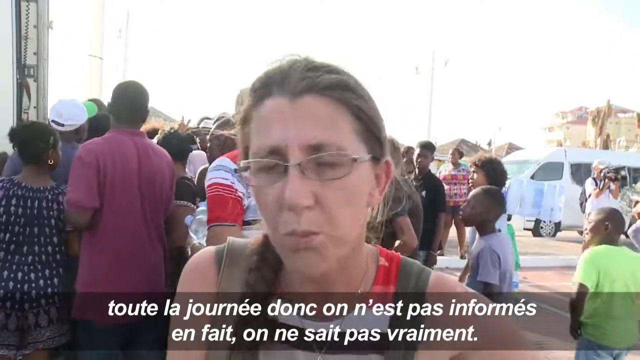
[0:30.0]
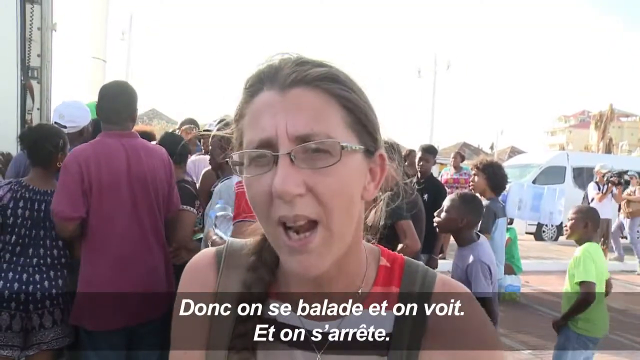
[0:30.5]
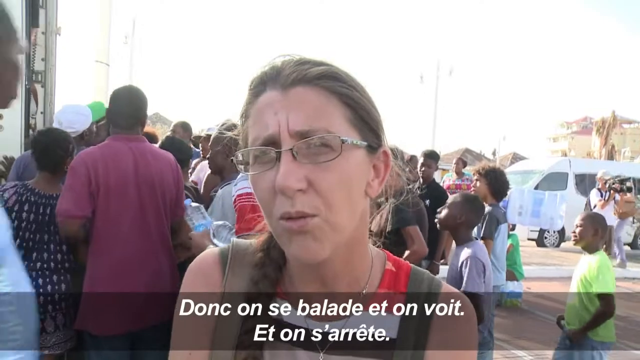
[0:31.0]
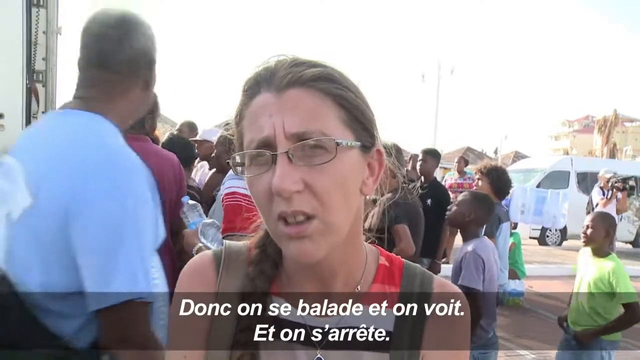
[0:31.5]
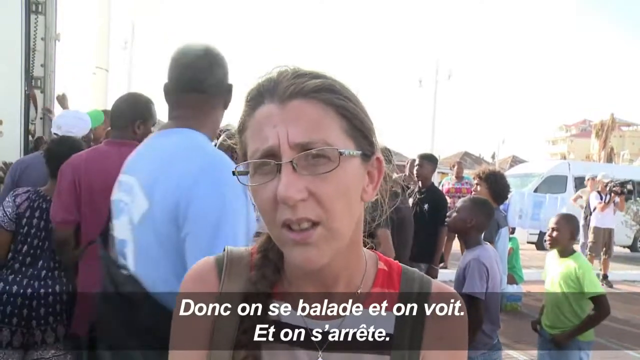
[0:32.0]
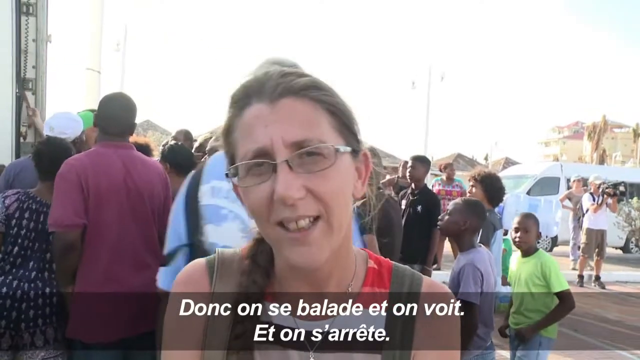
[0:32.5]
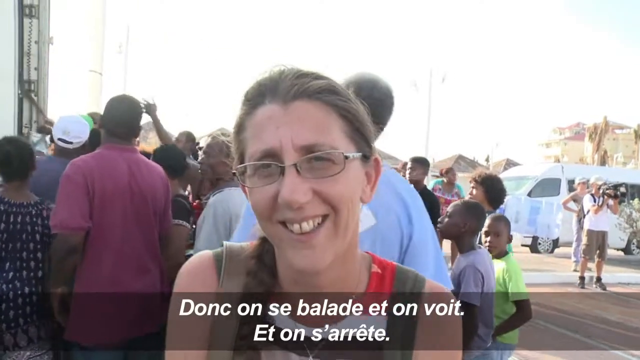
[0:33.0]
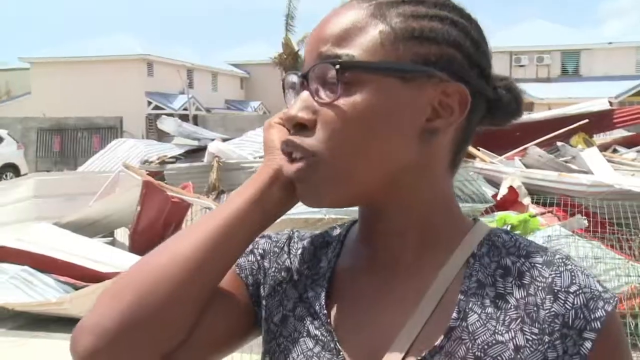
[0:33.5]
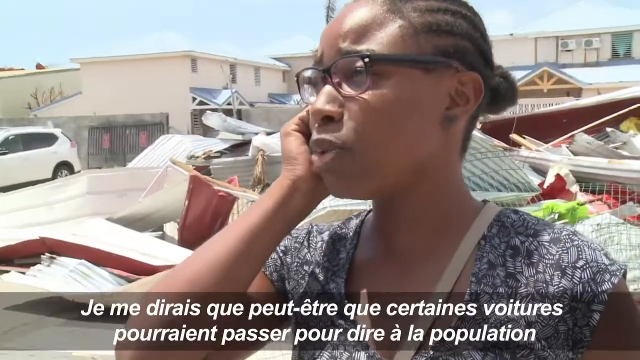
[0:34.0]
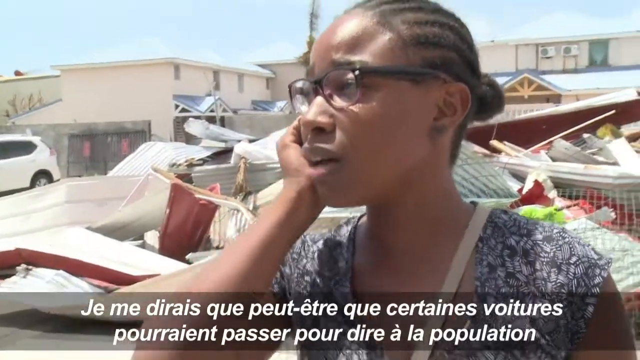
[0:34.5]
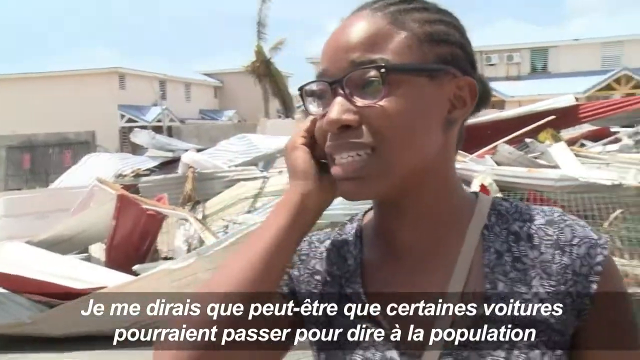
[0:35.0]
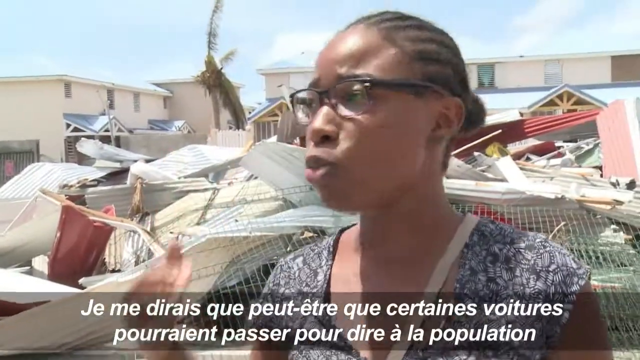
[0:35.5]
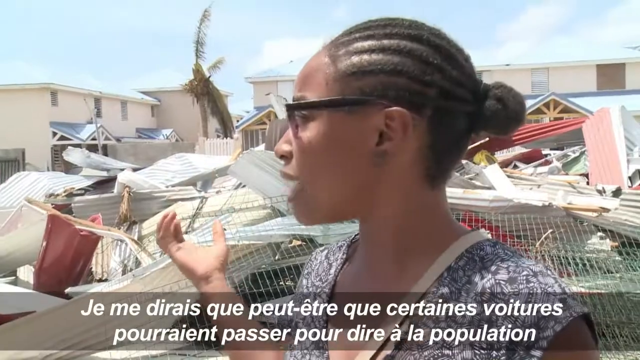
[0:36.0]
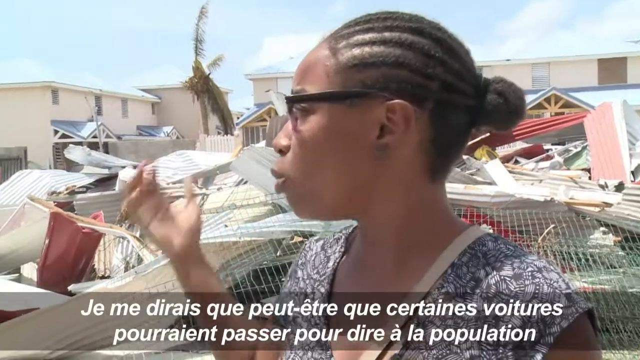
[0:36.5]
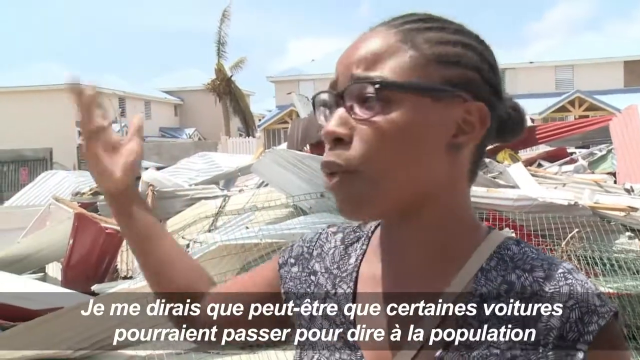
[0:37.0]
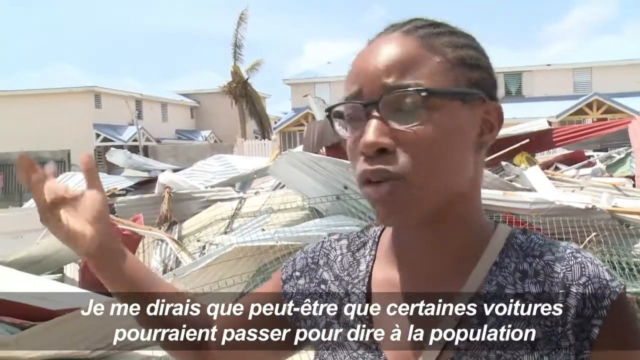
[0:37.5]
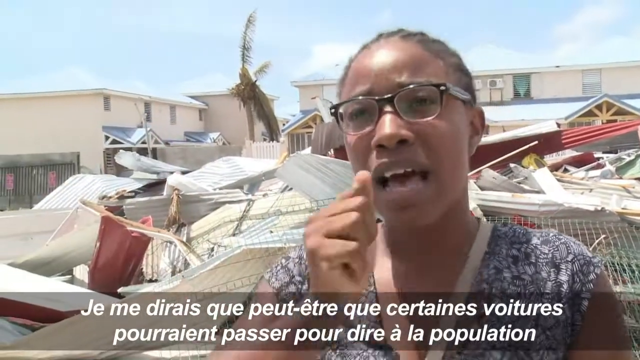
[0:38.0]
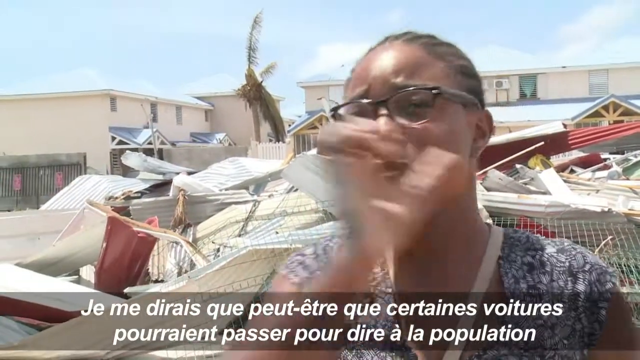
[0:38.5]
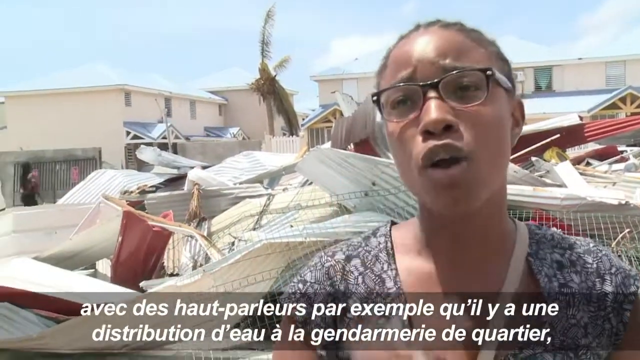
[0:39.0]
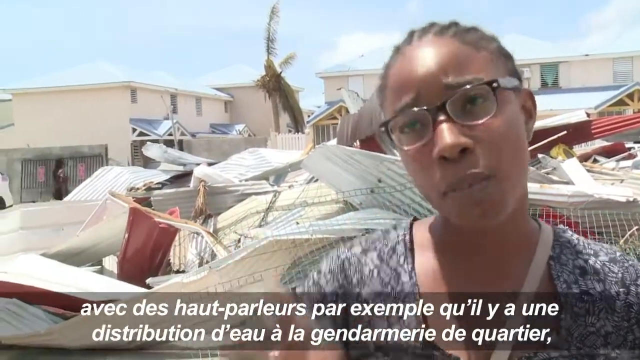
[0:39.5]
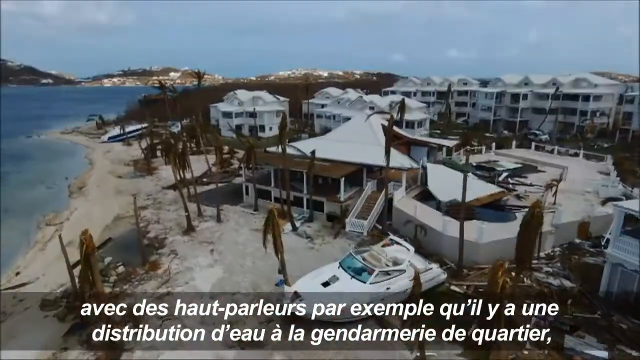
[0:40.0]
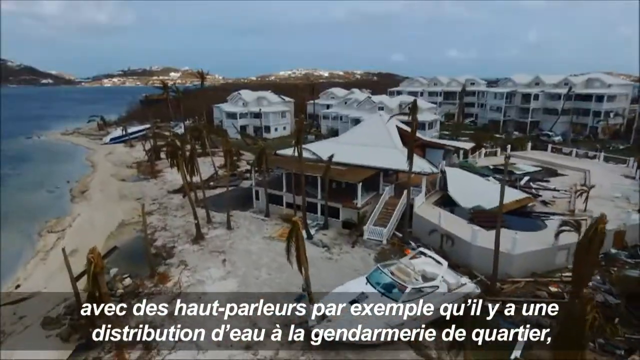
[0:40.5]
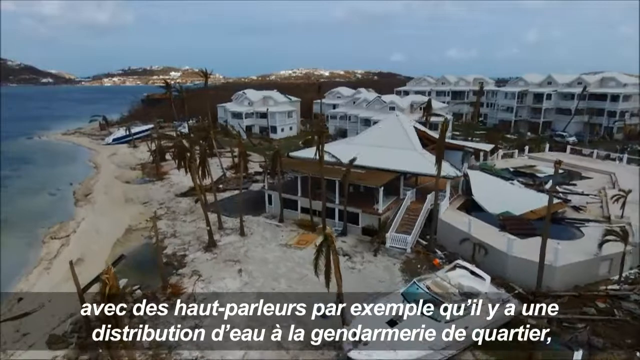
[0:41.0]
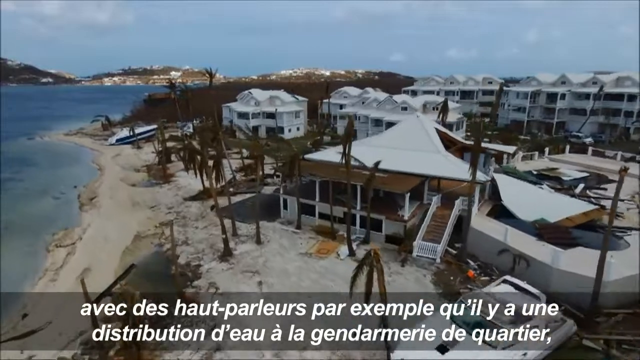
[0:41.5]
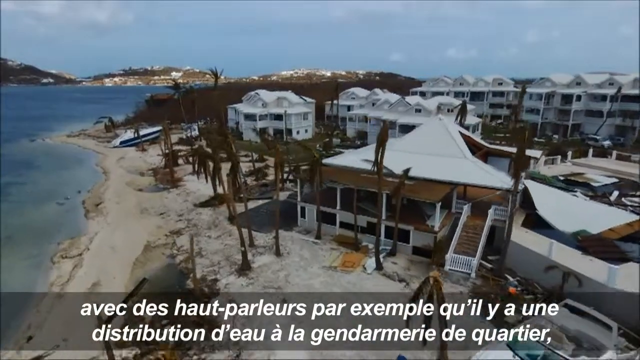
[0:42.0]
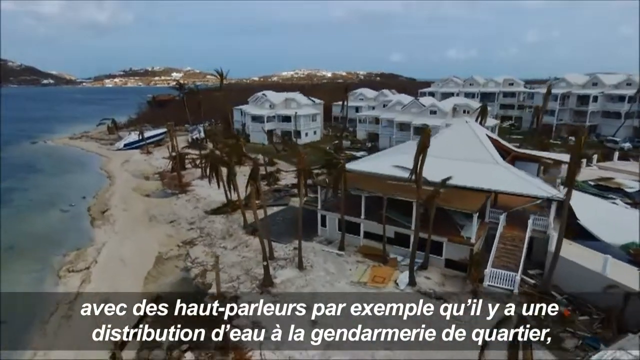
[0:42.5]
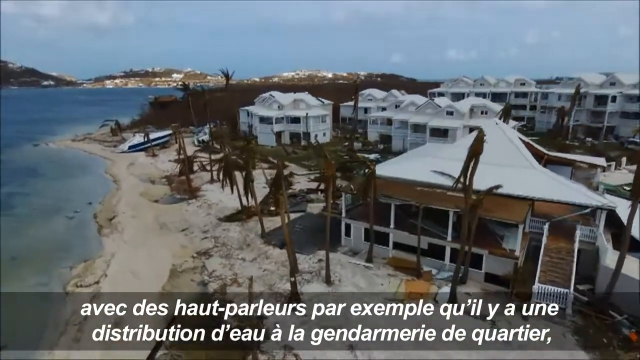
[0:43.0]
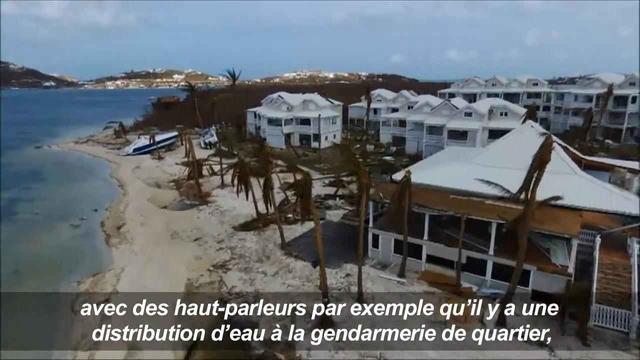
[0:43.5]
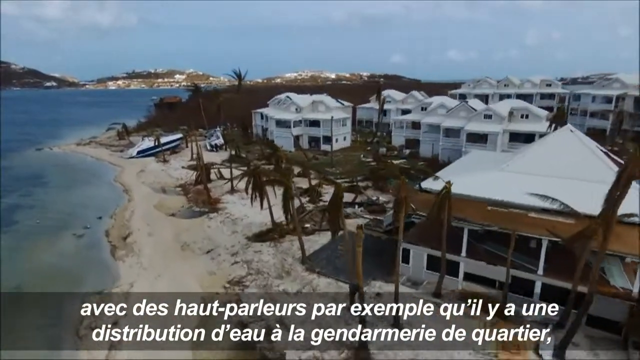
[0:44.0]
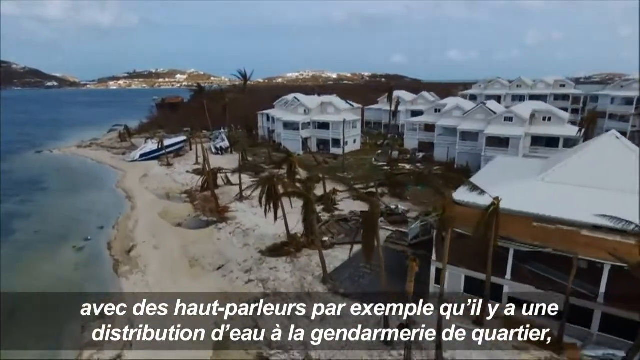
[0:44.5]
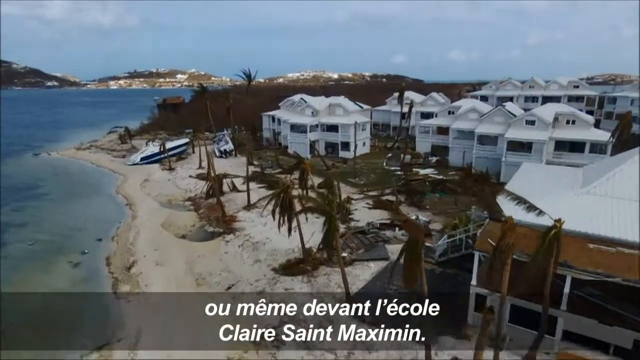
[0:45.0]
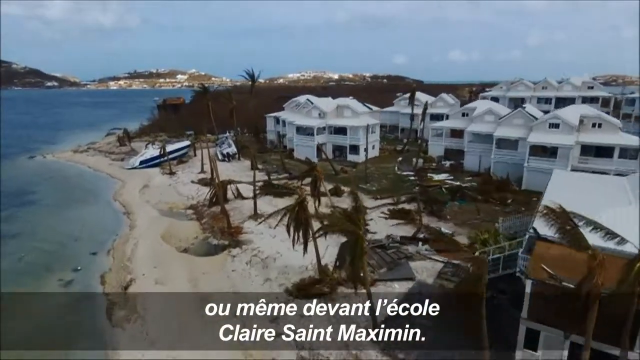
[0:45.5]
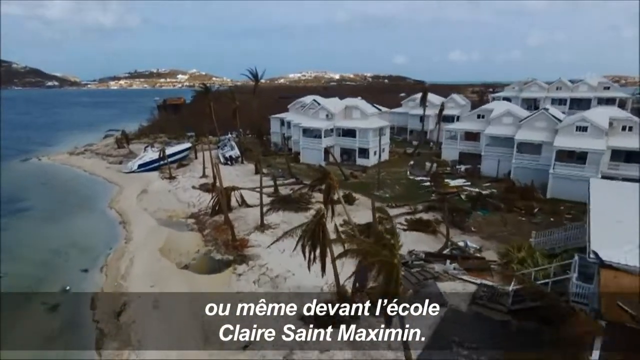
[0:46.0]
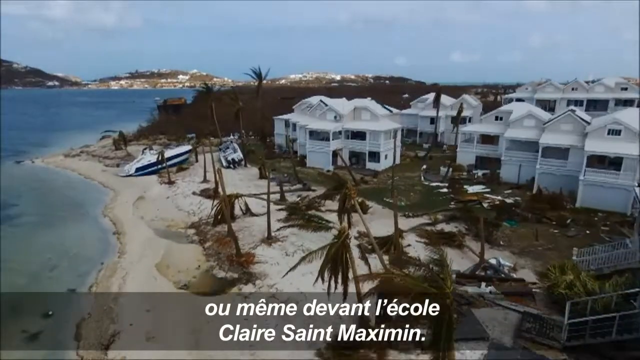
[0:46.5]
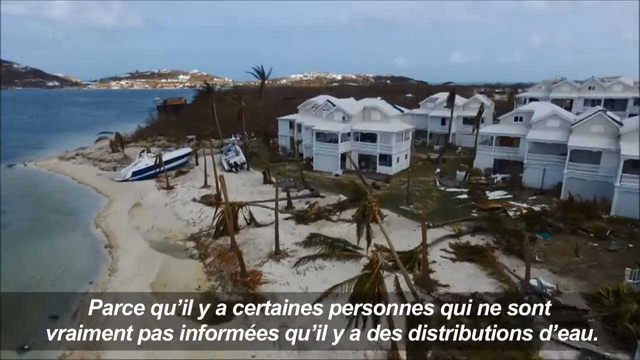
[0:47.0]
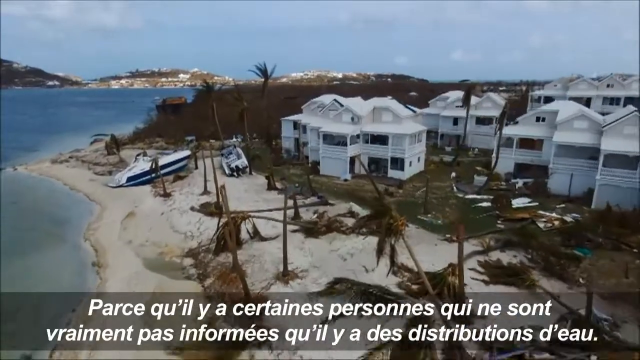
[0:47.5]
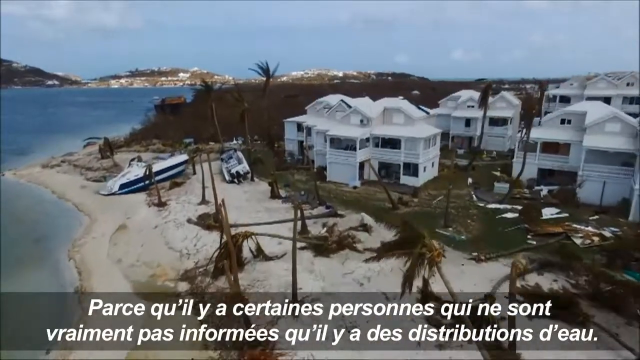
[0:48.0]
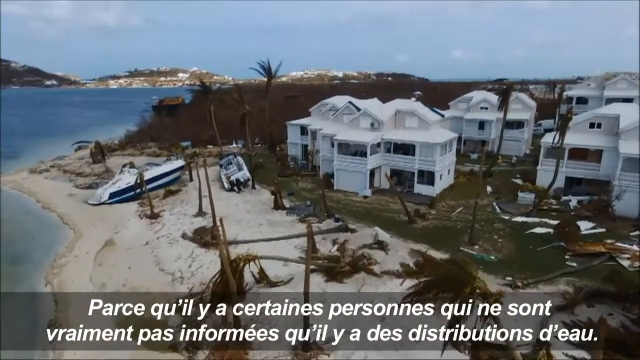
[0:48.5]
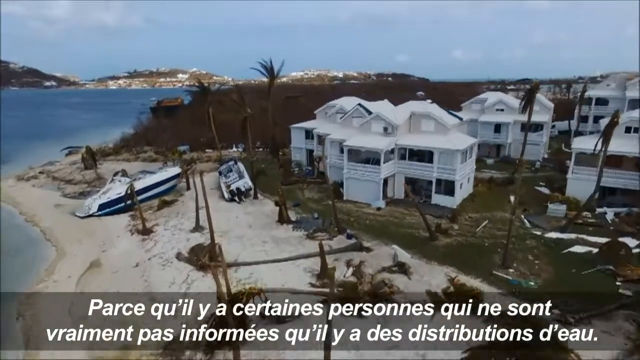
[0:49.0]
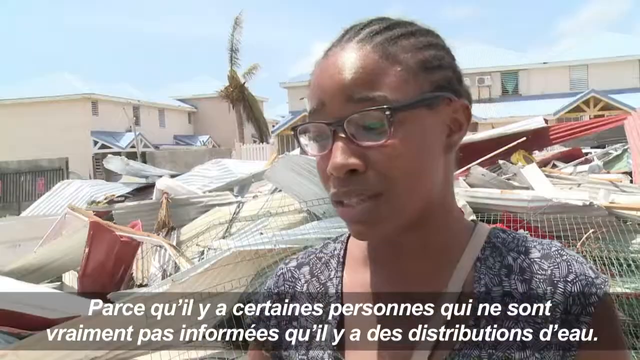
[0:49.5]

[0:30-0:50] The woman in glasses next to the truck continues to speak and ends the interview with a slight laugh, which appears not to be a happy laugh but a hopeless, conceding one. Next, an African-American woman wearing glasses and a dark gray dress has her hand up along her right cheek. She turns to her right and extends her right arm toward the scene behind her: a completely flattened house. There is a lot of debris on the ground, and behind her other houses are still standing, but the one she stands in front of is completely flat. The aerial view continues as the camera travels along the beach line. Besides the damage to the houses, there are boats in the yards that appear to have washed ashore along with a lot of other debris.